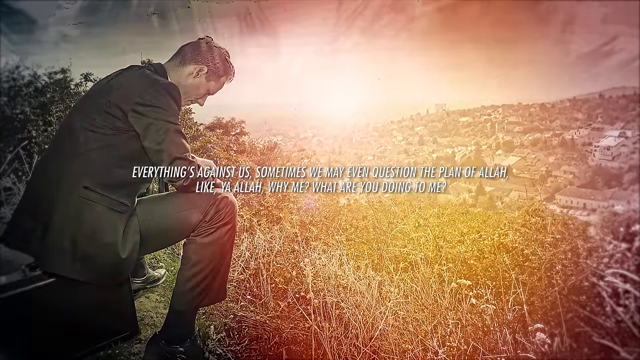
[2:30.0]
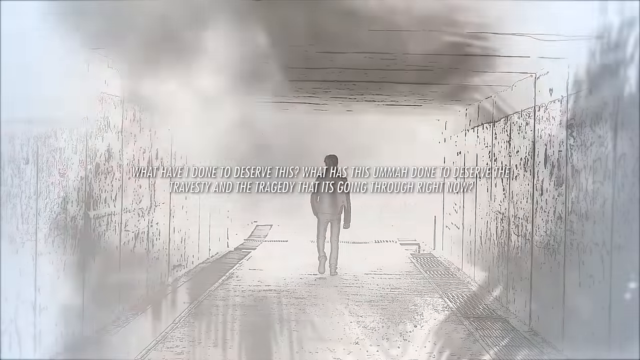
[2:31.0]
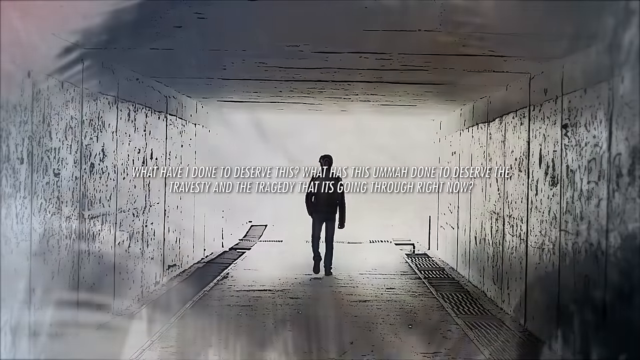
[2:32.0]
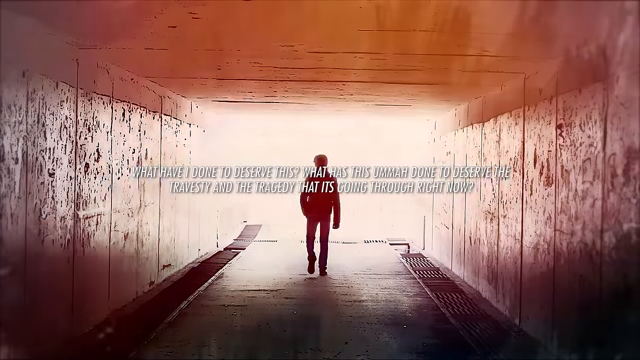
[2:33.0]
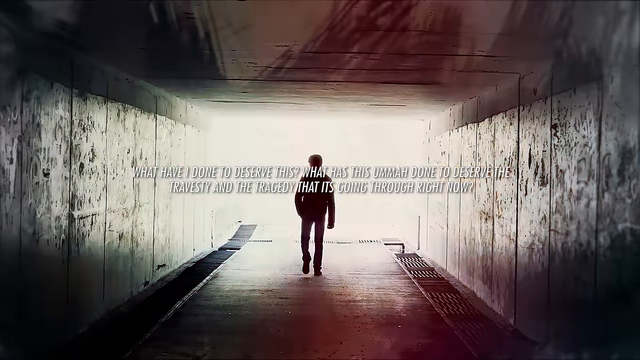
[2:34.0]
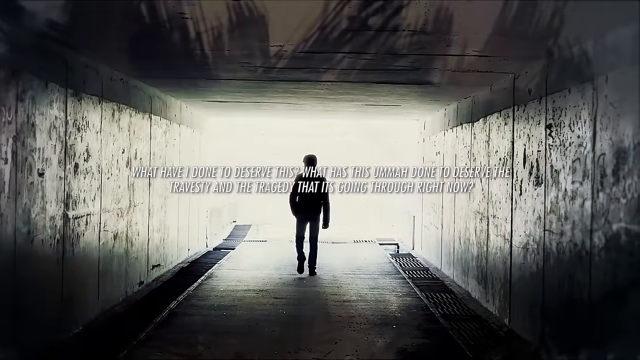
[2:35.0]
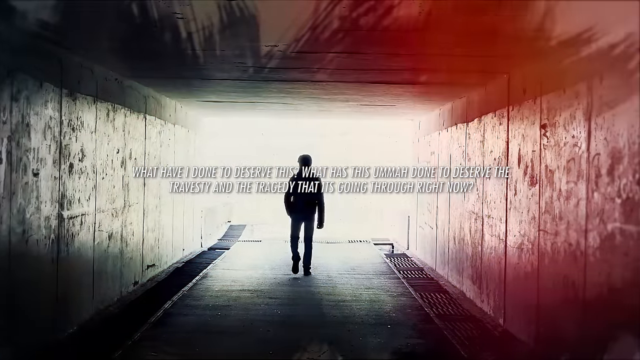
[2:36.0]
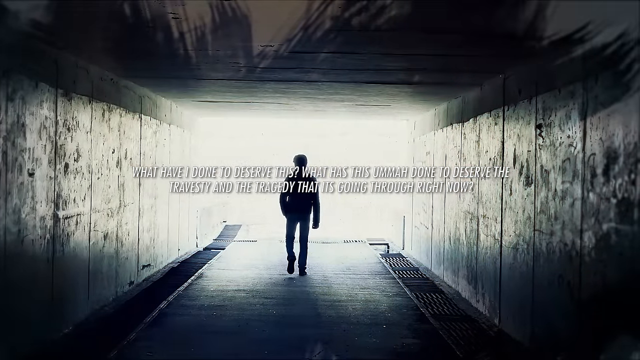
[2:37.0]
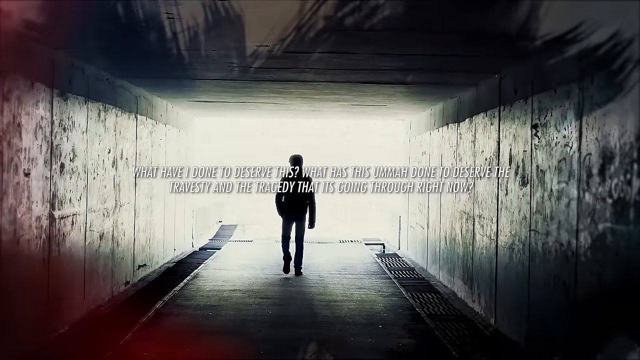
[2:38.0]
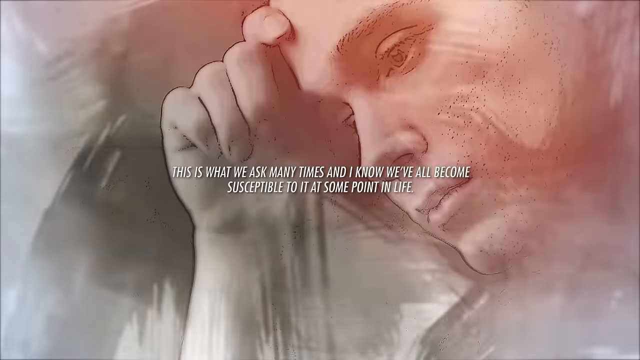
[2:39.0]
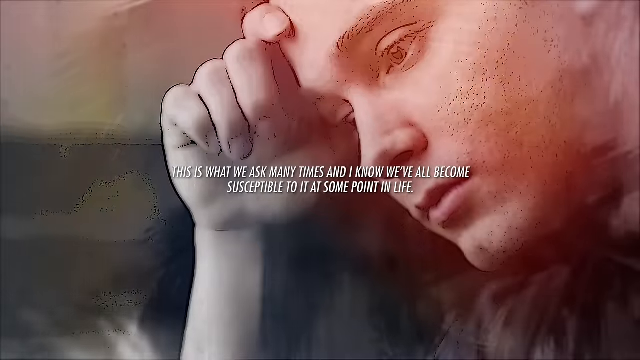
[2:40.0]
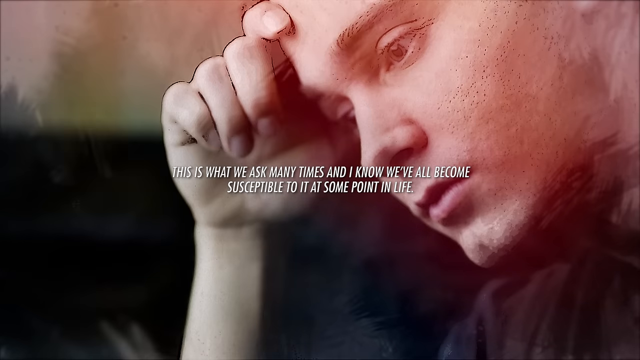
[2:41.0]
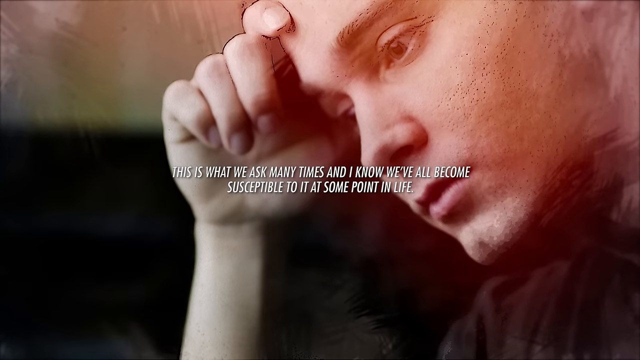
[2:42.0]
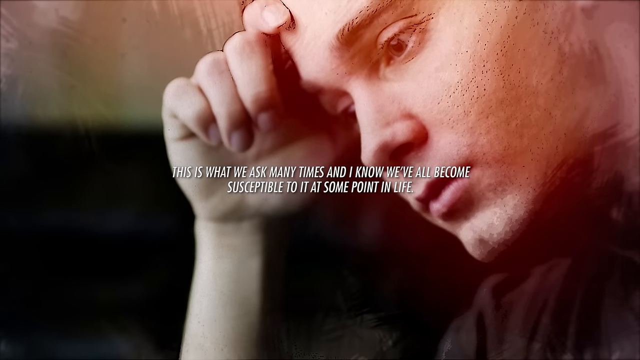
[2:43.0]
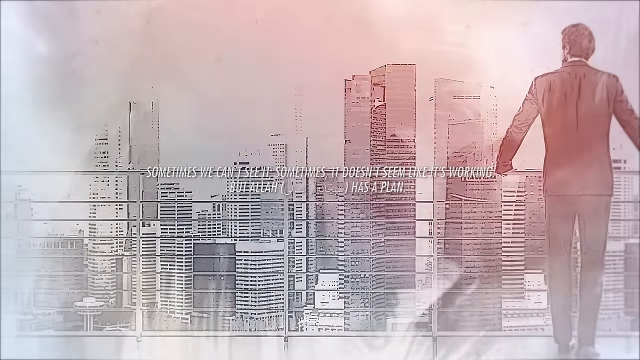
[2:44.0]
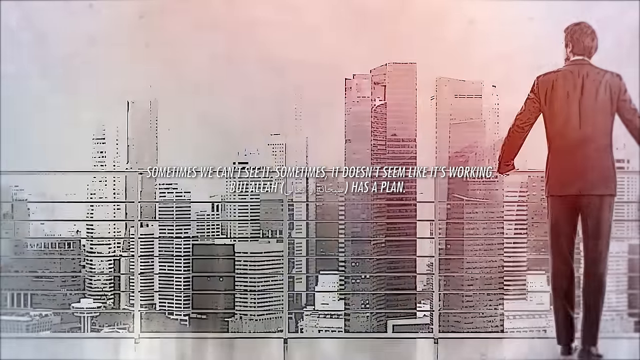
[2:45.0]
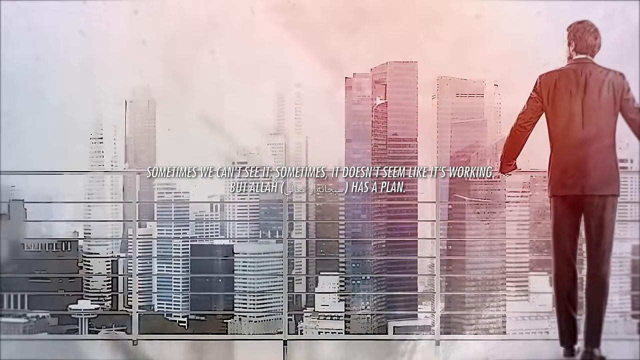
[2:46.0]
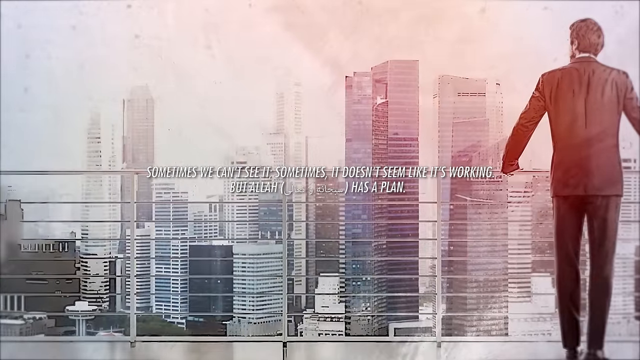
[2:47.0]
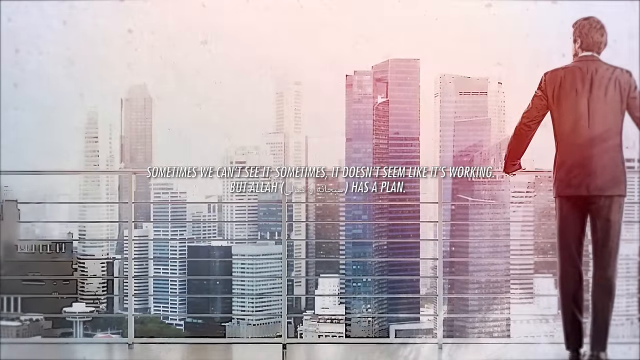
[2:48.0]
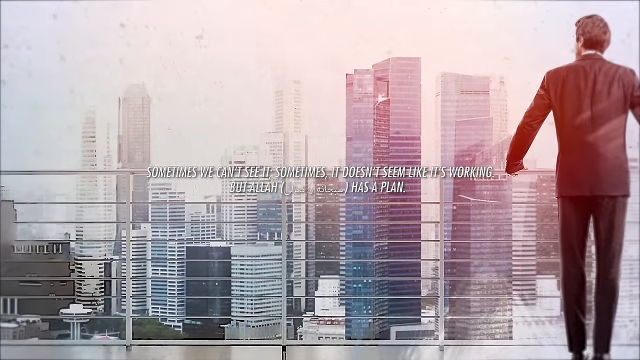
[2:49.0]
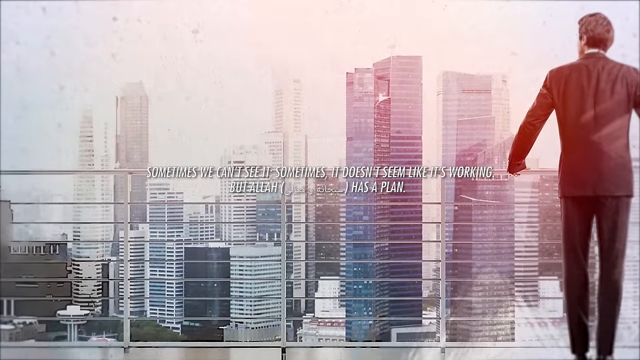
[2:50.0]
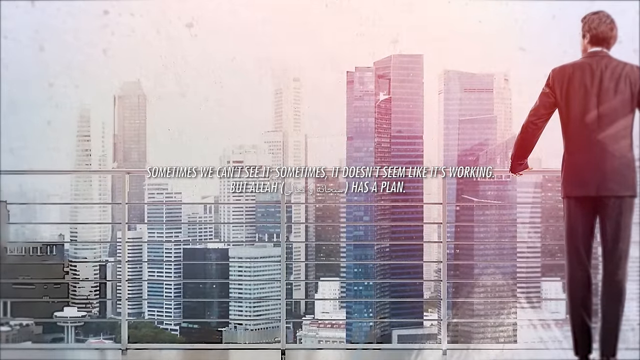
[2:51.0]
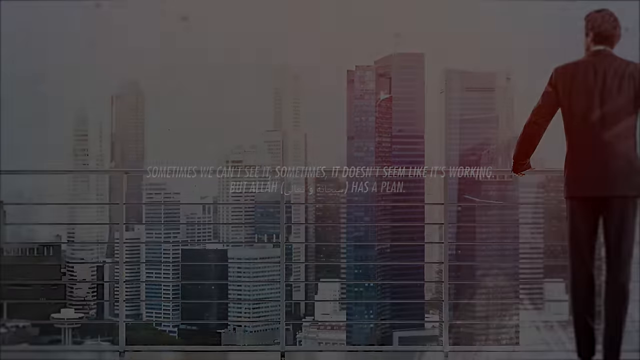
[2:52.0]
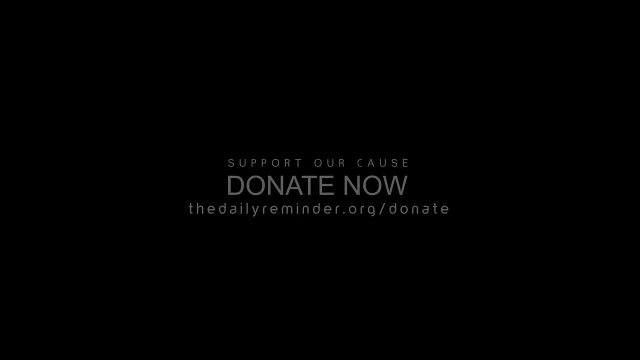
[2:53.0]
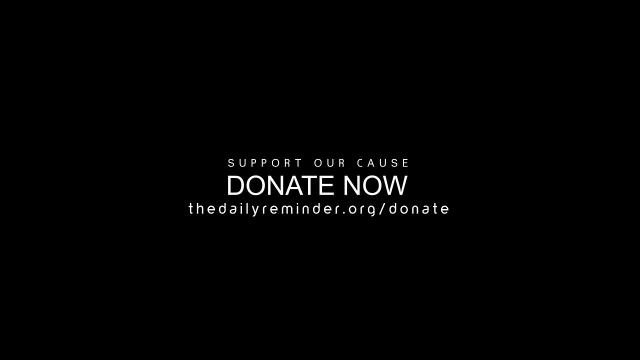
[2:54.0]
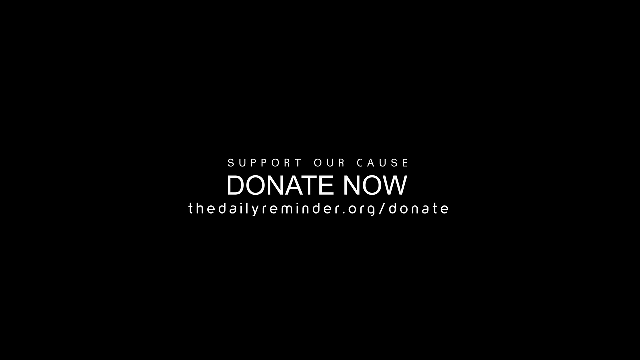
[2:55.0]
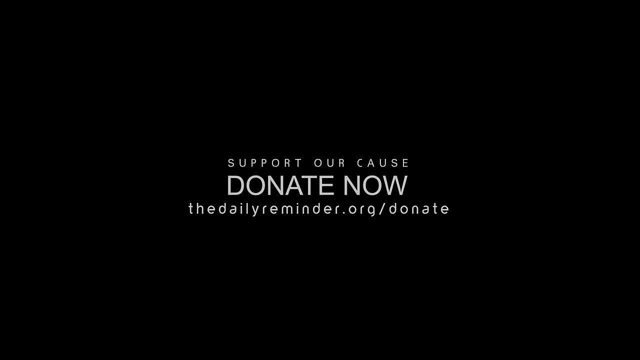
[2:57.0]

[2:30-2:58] A picture shows a man kneeling on the ground, seemingly in prayer, with light coming from the center back and grass around him. He appears to be wearing a suit with tennis shoes, his body faces right, and he has perhaps two to three inches of black hair and doesn't seem to have any facial hair. After a fade to black, a man is seen walking down what looks like a subway tunnel. There is a white light behind him and he is outlined in black, so his clothing and features cannot be seen; he is also a bit far away, toward the end of the tunnel. His left leg from the viewer's perspective is raised slightly, as if he is about to finish taking a step, while his other foot is flat on the ground. Next is a contemplative picture of a man staring off absentmindedly toward the bottom left corner of the view. His right hand holds his head, with his index finger above his eyebrow and his thumb behind his eye, while his other fingers are slightly bent, making him look like he is thinking. Another picture shows a man standing against a rail guard on a tall skyscraper, overlooking the city in the distance, with text in the middle throughout; the sky light is very white and almost blinding, with hues of blue and red. The video then fades to black with text in the middle that reads "support our cause. Donate now to dailyreminder.org/donate".